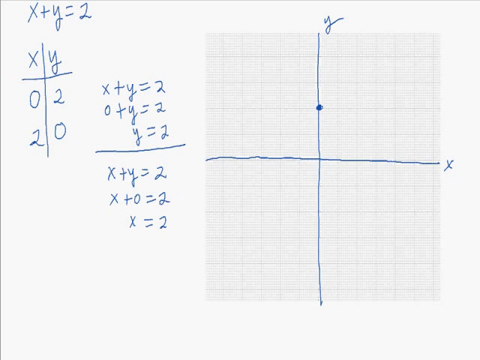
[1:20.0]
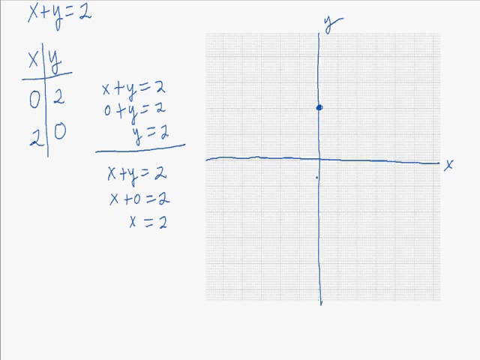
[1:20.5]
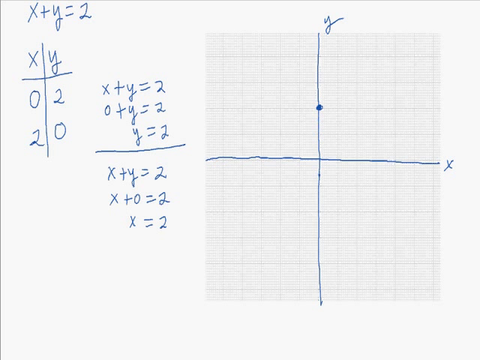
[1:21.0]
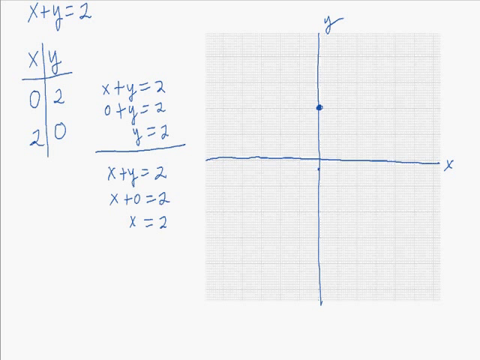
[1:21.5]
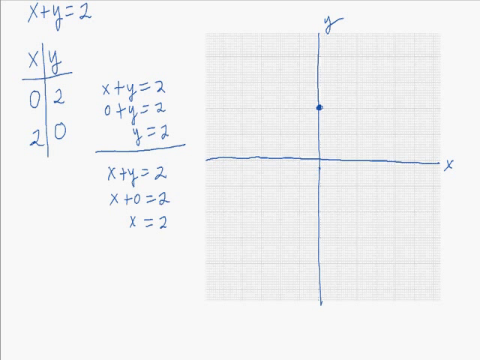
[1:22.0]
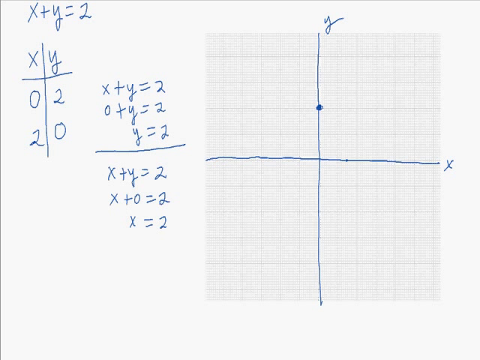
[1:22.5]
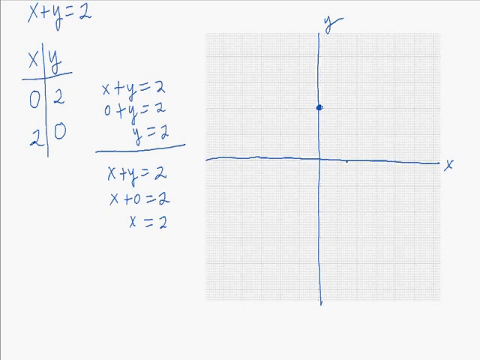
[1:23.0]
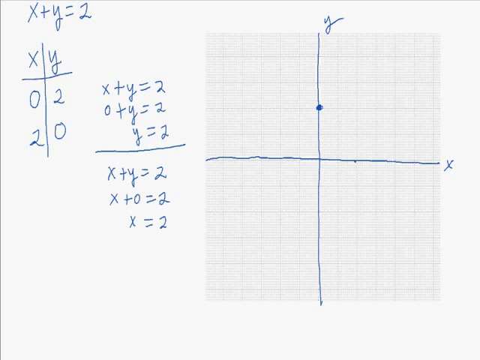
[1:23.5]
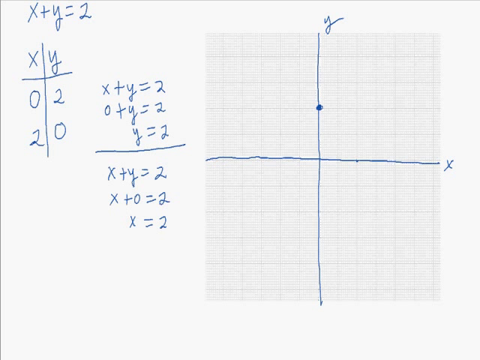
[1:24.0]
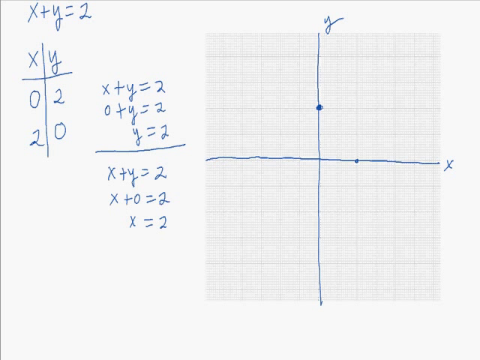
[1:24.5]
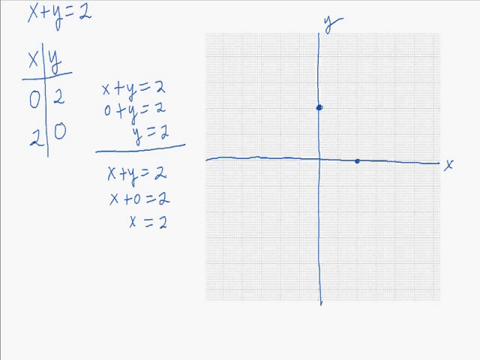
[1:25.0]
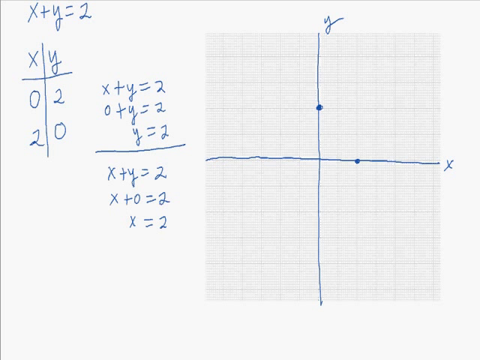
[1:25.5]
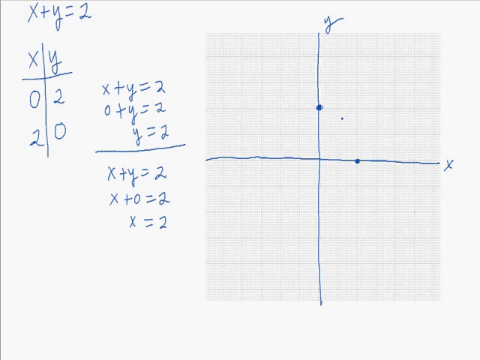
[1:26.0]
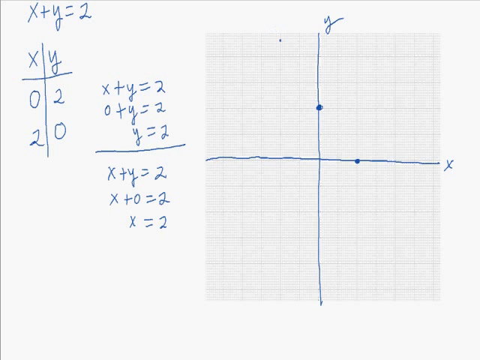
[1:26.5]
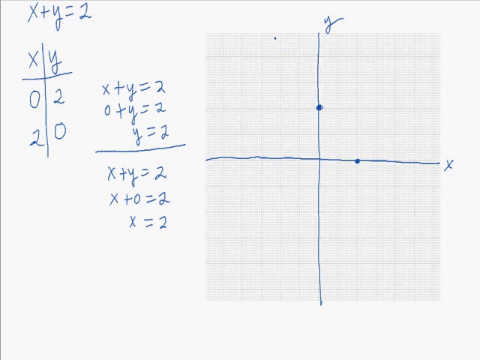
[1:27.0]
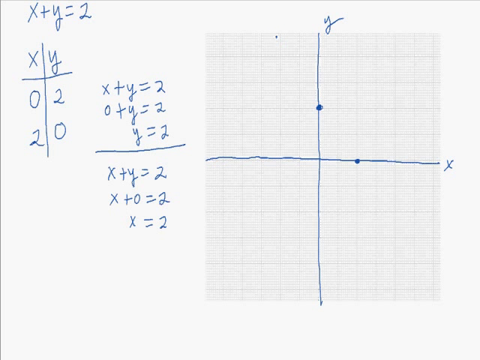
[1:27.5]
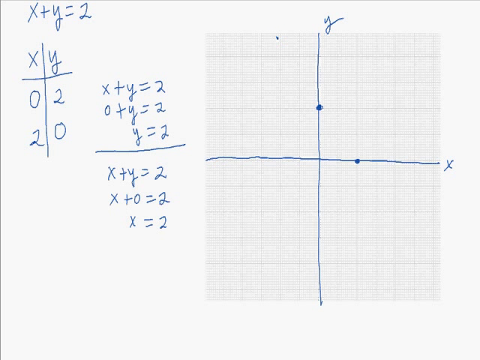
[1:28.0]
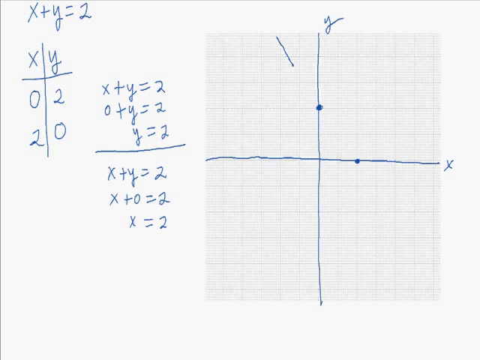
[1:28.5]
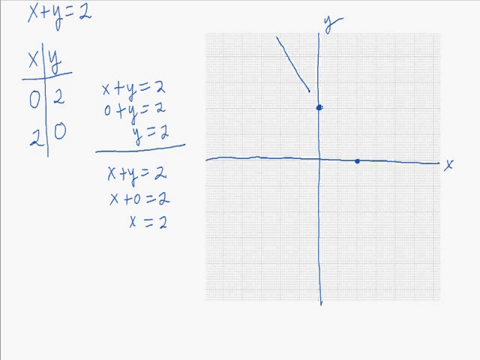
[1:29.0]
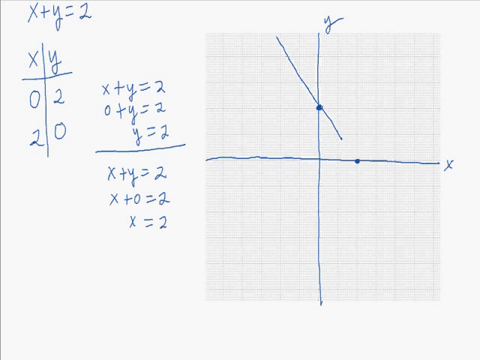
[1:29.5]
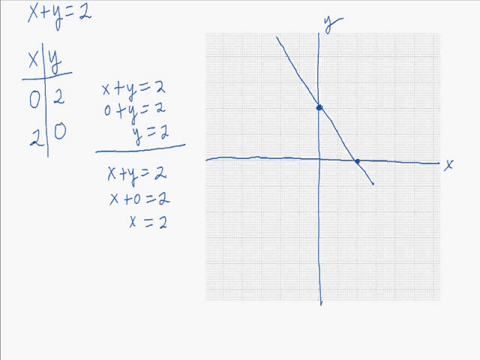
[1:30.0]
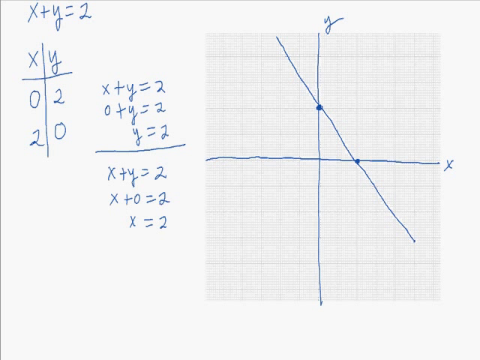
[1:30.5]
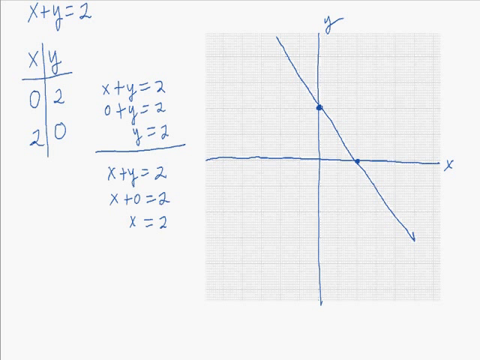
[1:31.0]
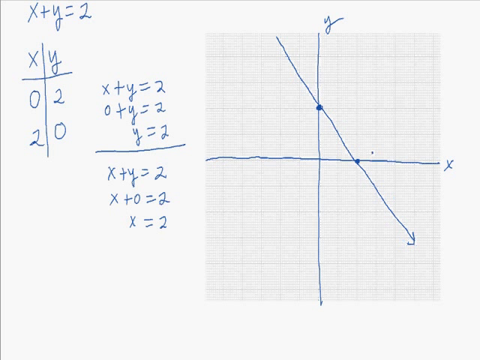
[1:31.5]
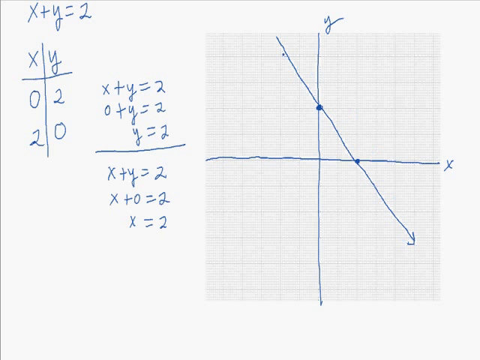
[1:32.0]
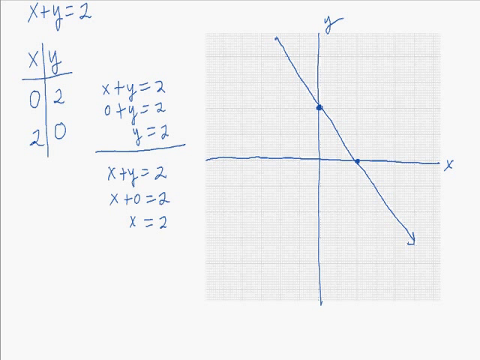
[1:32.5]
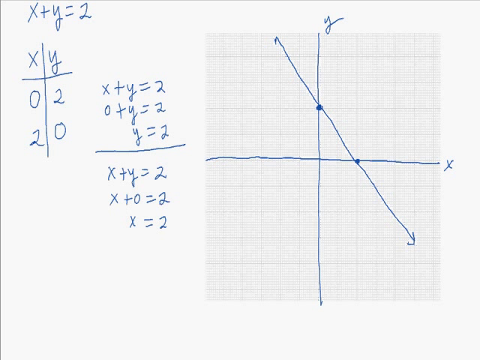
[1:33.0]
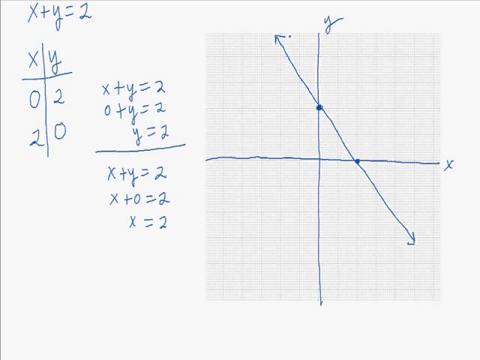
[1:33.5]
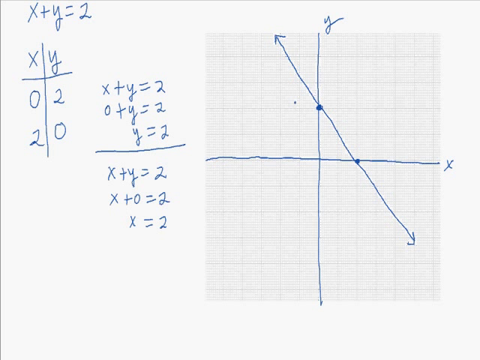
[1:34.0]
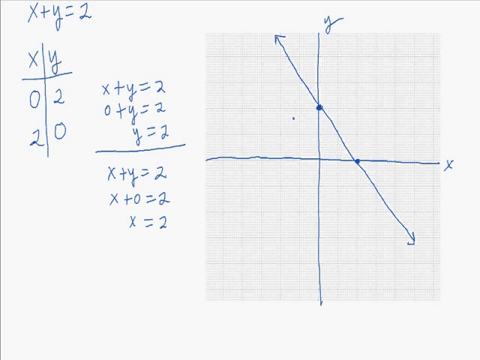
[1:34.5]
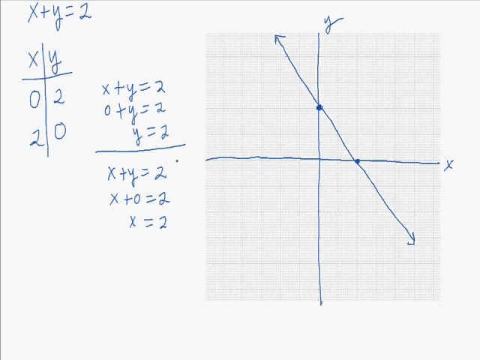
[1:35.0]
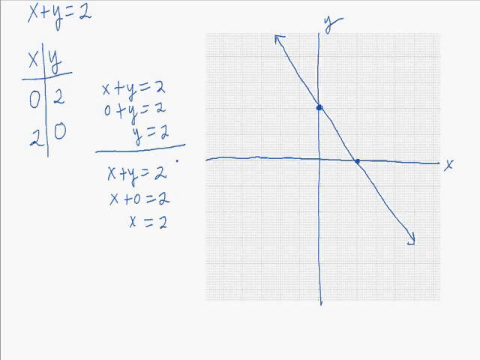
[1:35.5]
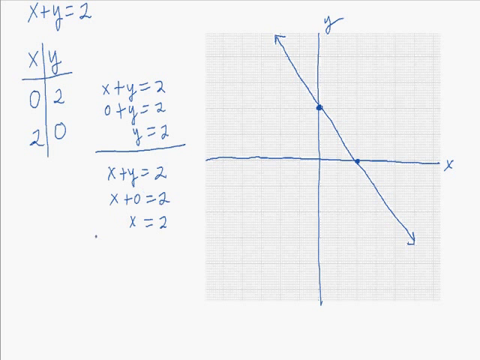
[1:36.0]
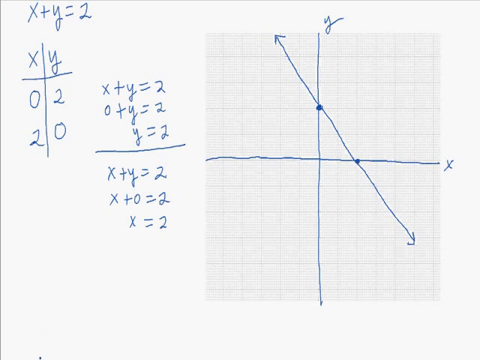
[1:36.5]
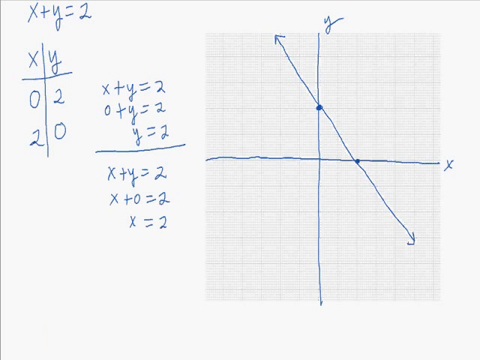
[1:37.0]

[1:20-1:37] The little dot hovers, then moves over and puts a dot on the x-axis, two over to the right of the center where the axes intersect. A line is then drawn starting from the upper left, two spaces over from the top of the y-axis, going down toward the lower right through the dot on the y-axis and continuing straight through the dot on the x-axis. It keeps going down about three rows below the x-axis and ends in an arrow pointing down to the lower right. The dot then goes back up to where the line started but draws nothing else. At the center, the line and the axes create kind of a triangle shape, with the two dots forming two of its corners.